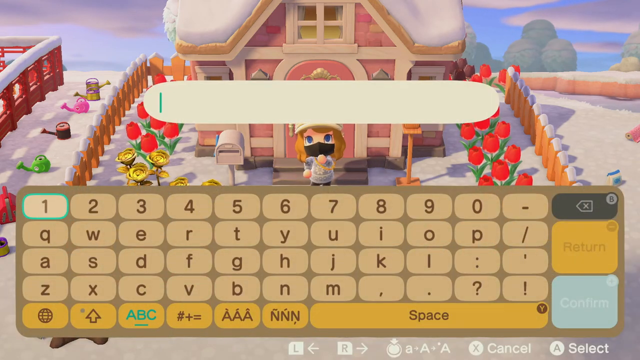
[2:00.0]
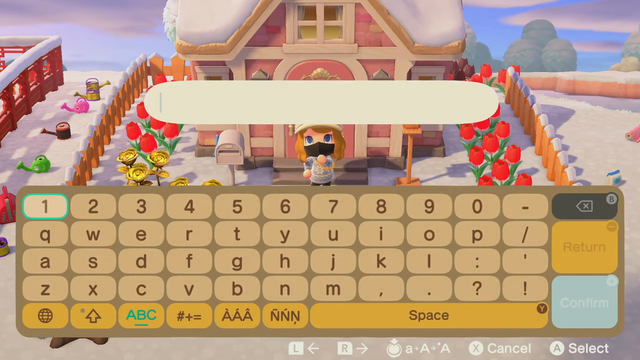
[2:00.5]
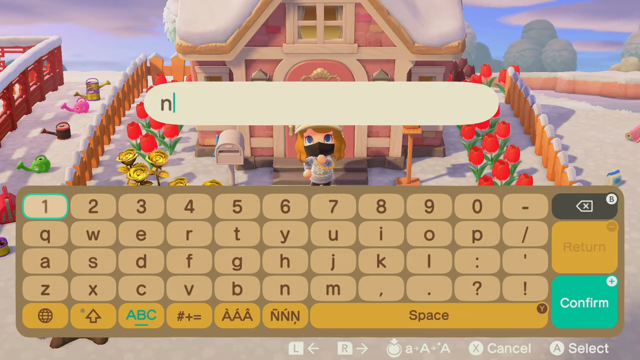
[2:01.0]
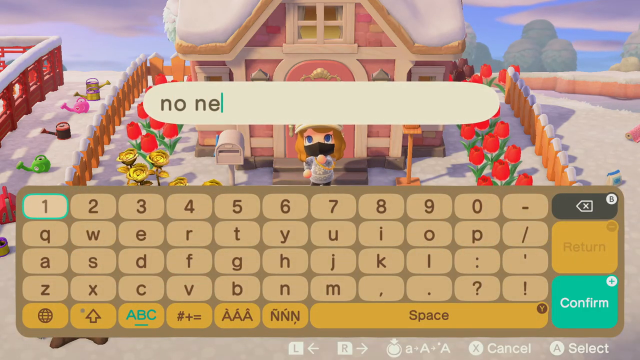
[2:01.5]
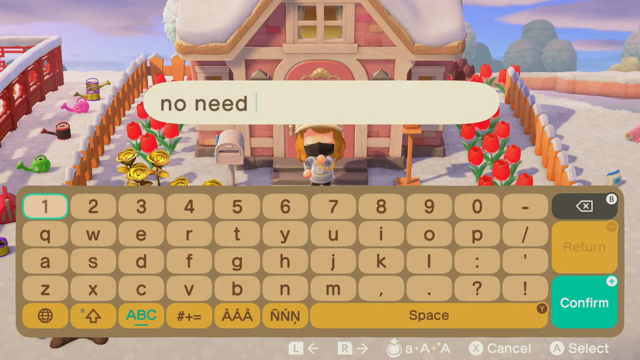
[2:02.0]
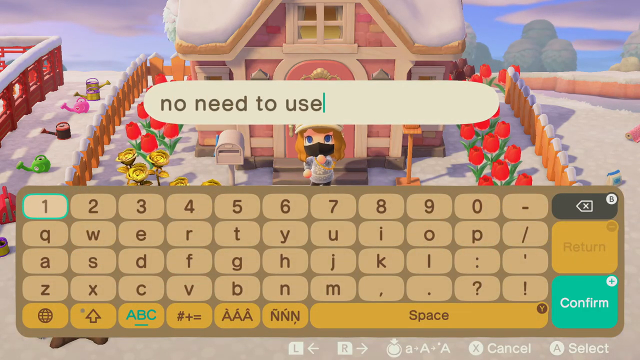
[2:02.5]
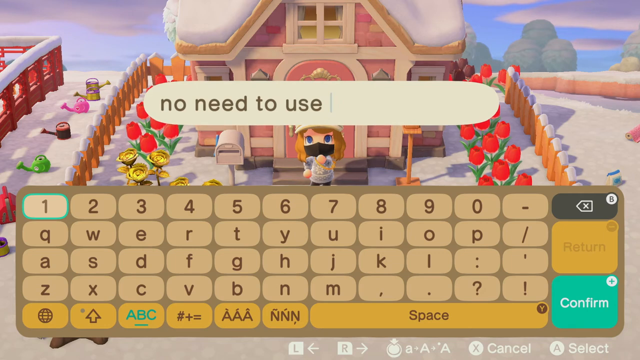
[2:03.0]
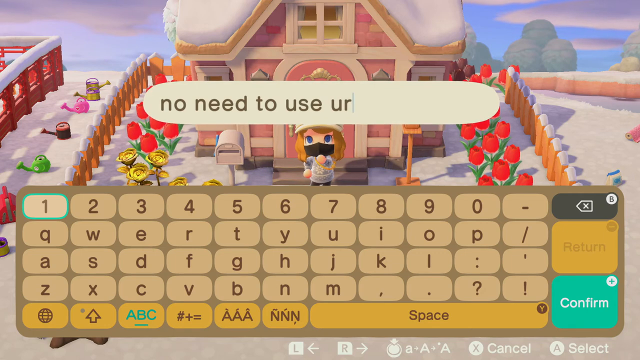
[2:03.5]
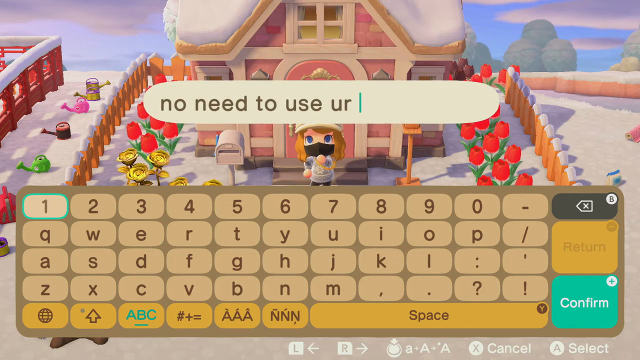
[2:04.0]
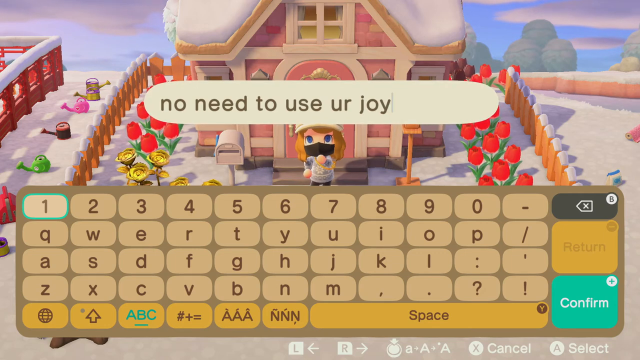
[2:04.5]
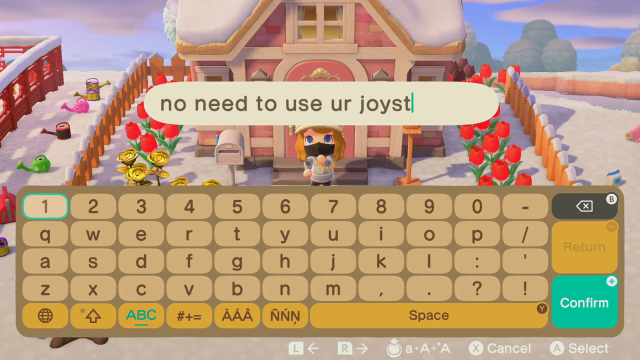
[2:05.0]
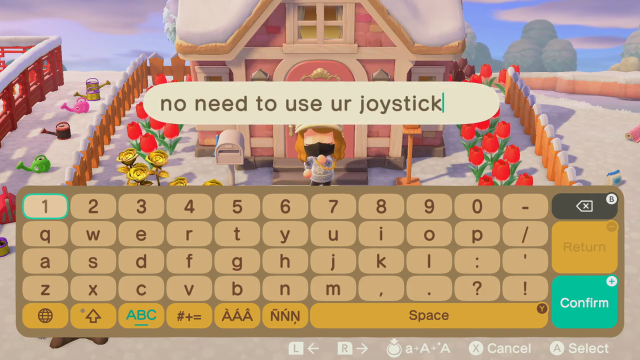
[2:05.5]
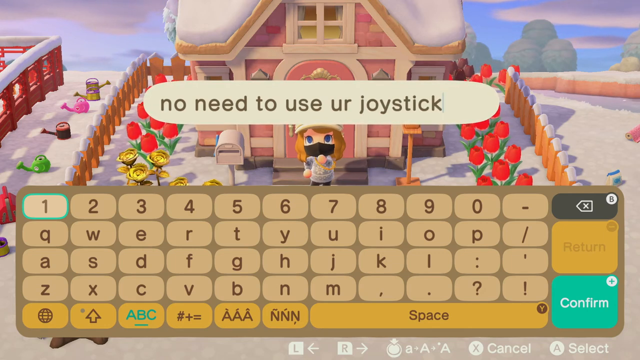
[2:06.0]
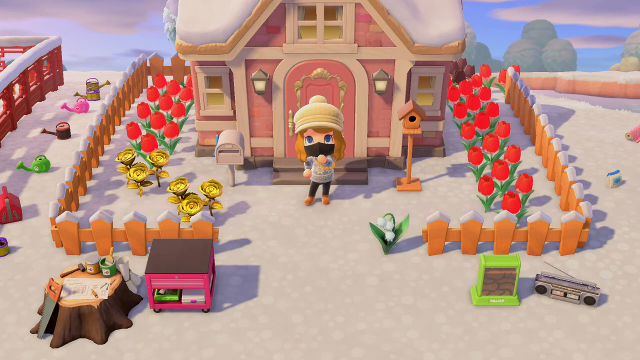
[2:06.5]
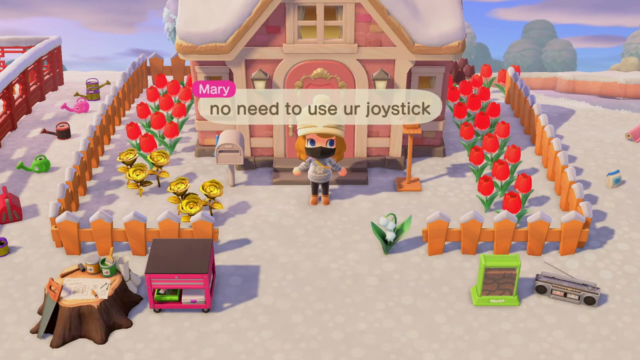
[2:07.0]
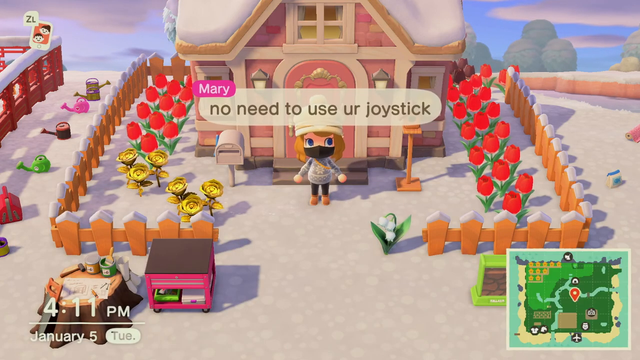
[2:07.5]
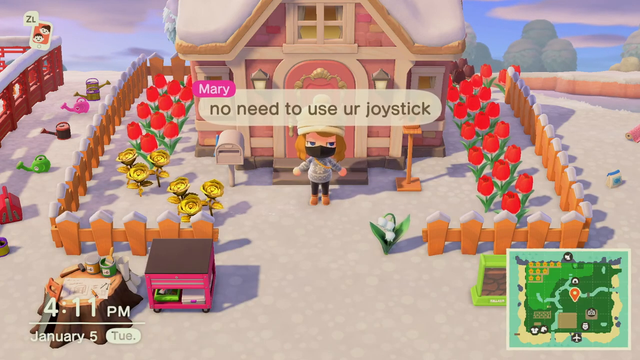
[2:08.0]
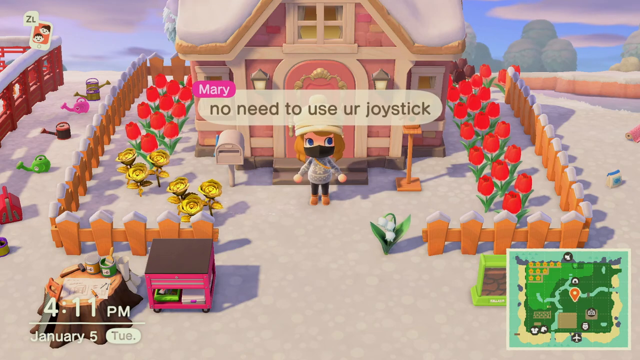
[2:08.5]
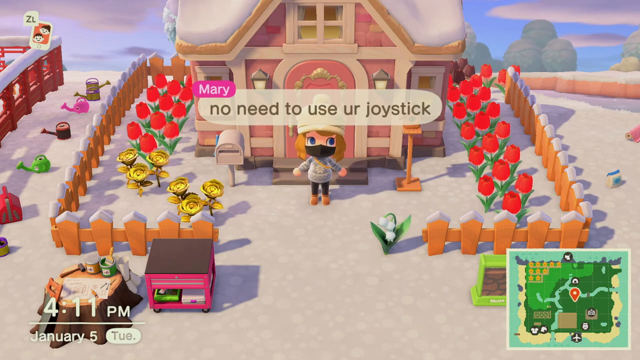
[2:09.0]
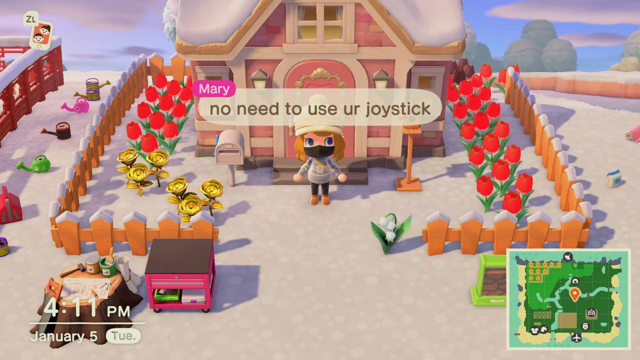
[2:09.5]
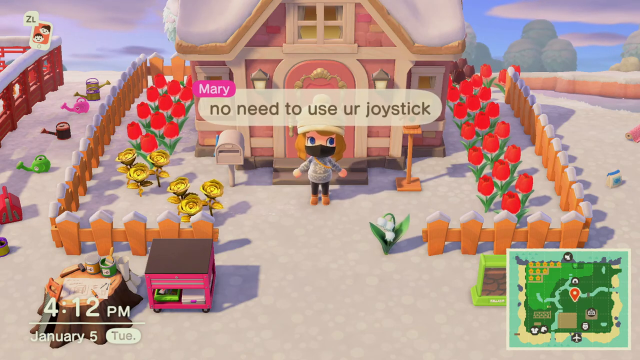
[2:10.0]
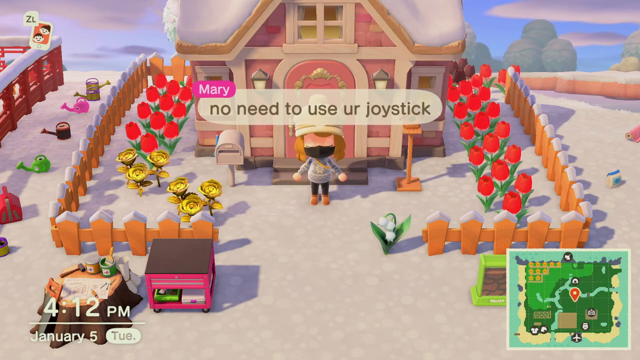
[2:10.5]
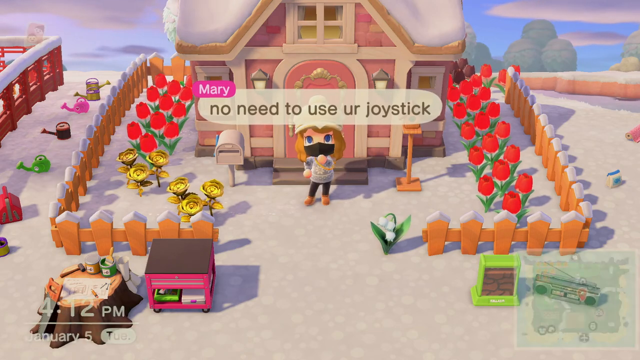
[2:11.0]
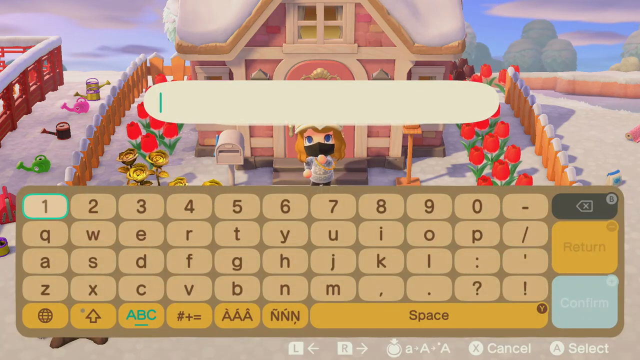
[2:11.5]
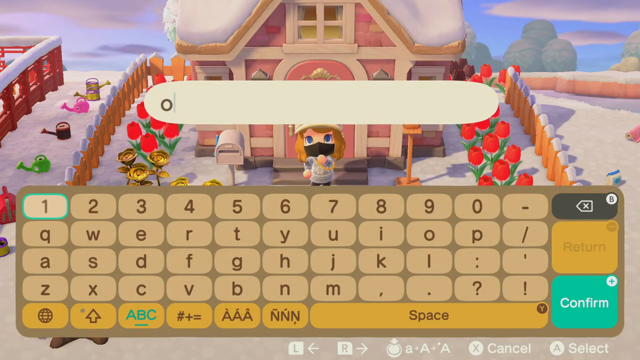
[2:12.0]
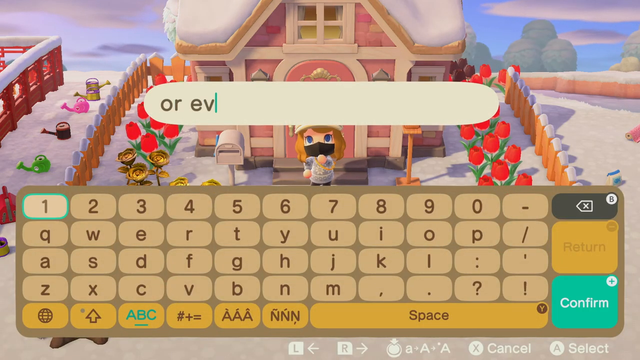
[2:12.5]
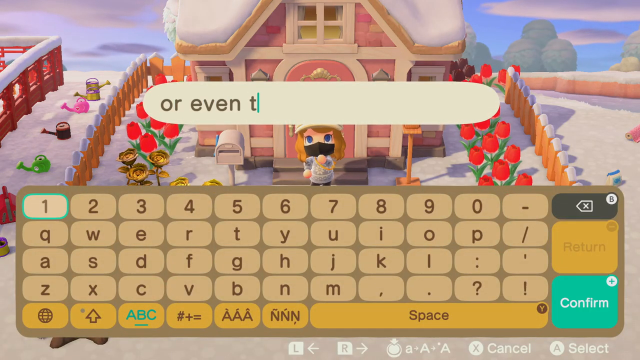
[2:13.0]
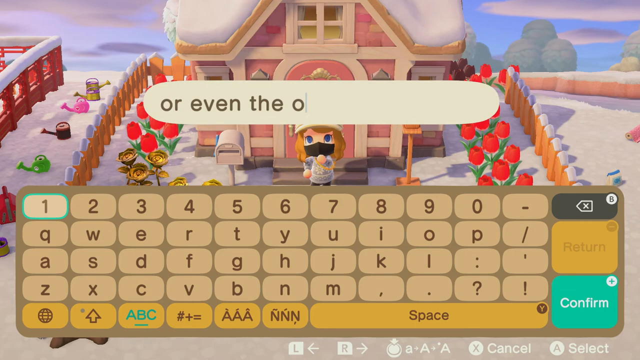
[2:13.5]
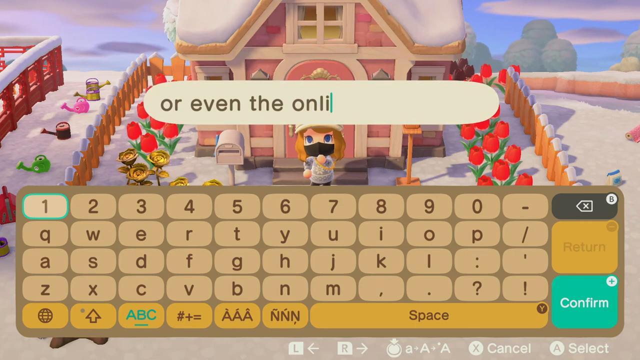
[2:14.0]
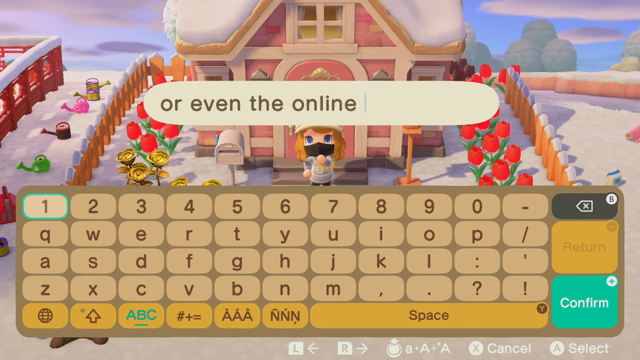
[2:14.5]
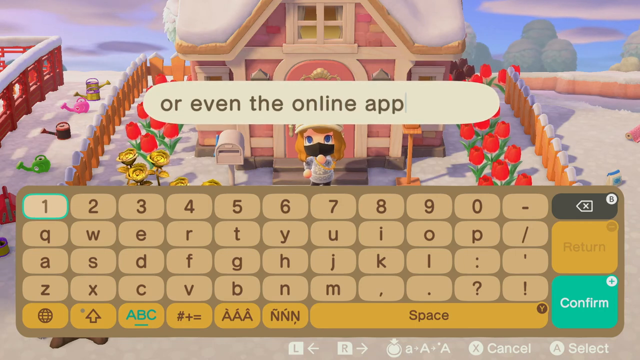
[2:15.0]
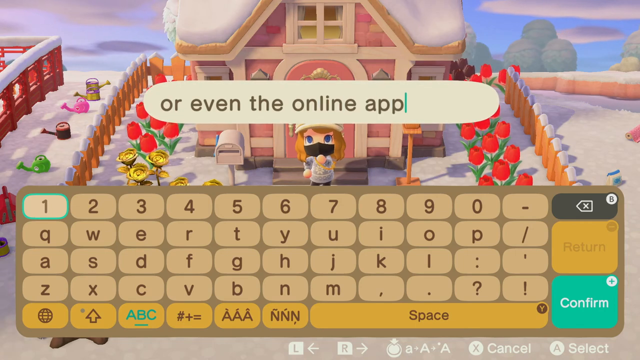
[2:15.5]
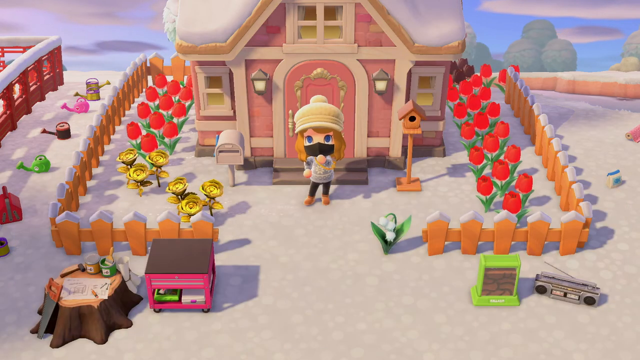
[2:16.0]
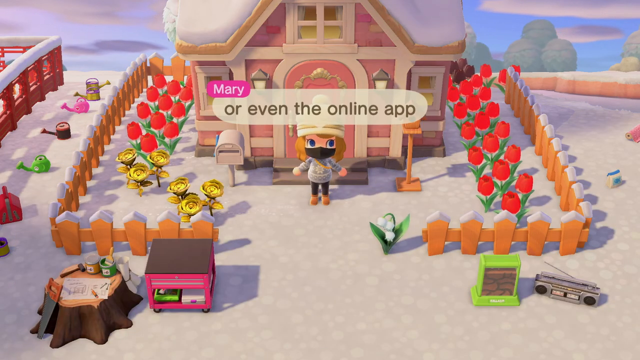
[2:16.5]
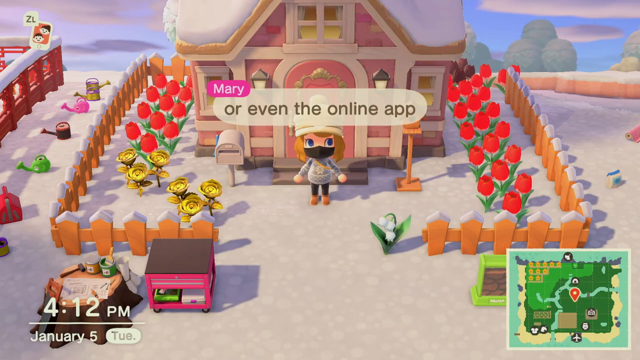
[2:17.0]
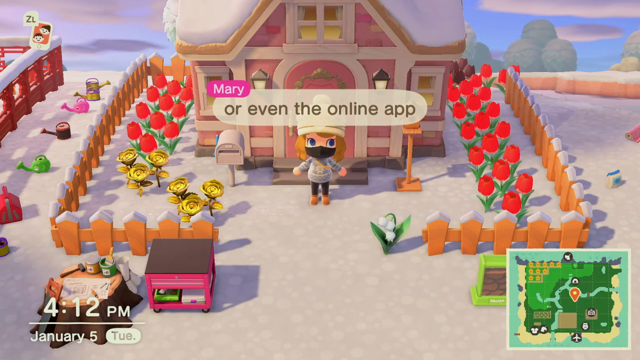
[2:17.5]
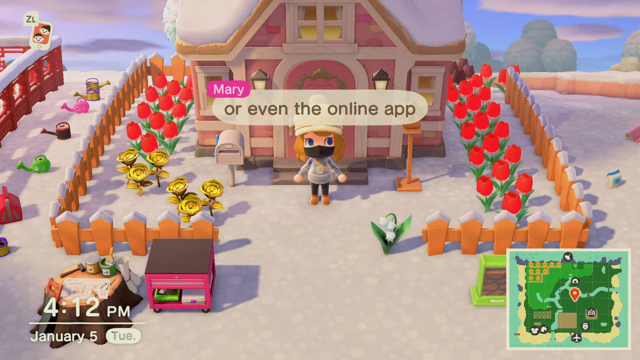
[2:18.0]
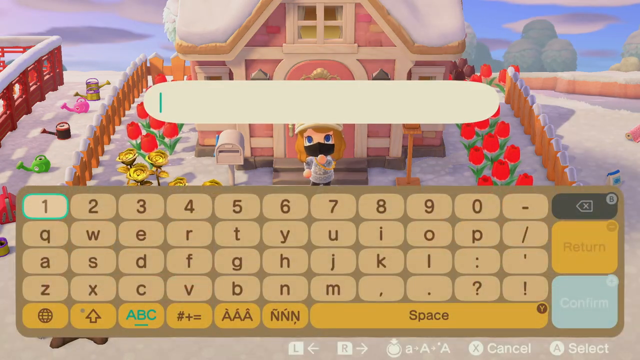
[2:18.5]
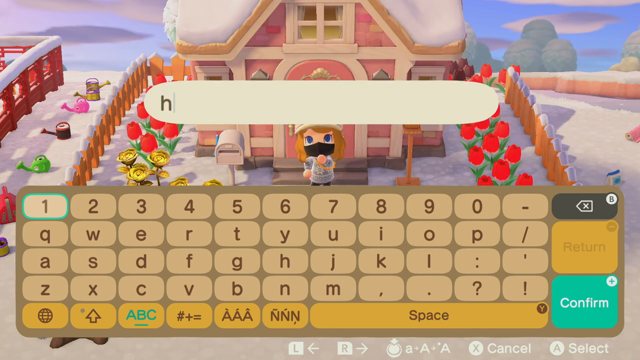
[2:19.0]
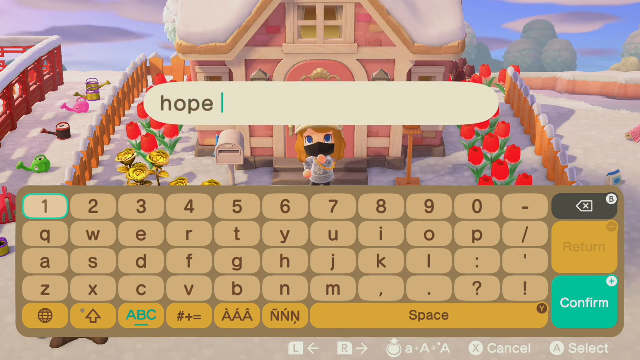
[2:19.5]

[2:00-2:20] The video game Animal Crossings is on screen, showing a character named Mary. Words are typed in for her to say: the text says "no need to use your joystick," and she says "no need to use your joystick." When she is talking, her name appears in pink over the white bubble holding the words, and she says "or even the online app." Then the text says "hope this" and stops. She comes out of a house that looks like a gingerbread house, with snow on the roof. A wooden picket fence surrounds the house, with snow on top of each slot of the fence. Red tulips and some yellow roses are growing, and watering cans line one side of the fence. It is a sunny day, with blue sky and some trees in the far distance. Mary wears a hat and a black mask over her face. She blinks a lot and moves her arms up and down while standing in front of her gingerbread house speaking. A green field pops up in the lower right-hand corner.